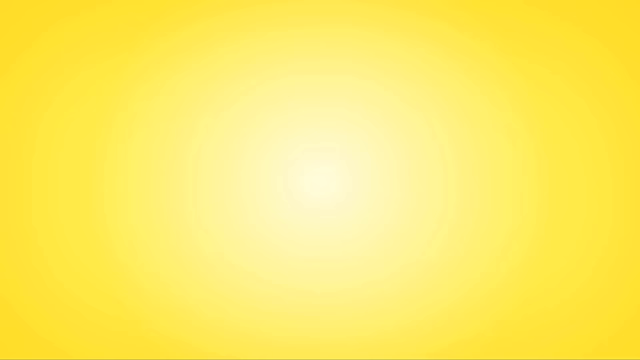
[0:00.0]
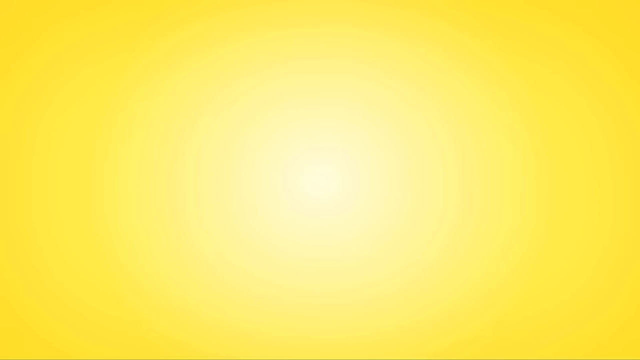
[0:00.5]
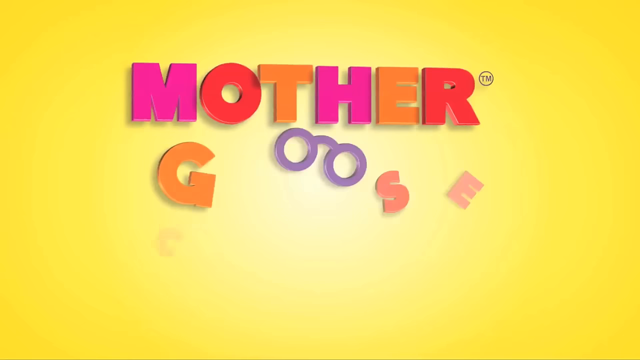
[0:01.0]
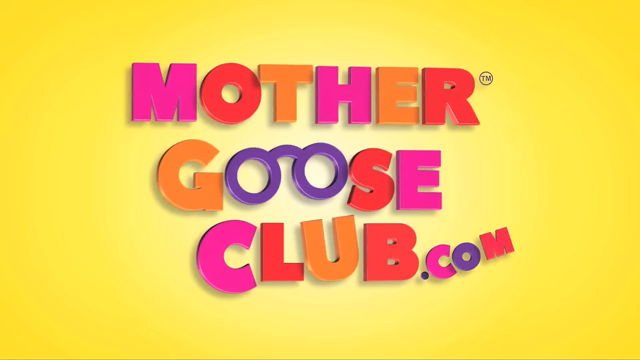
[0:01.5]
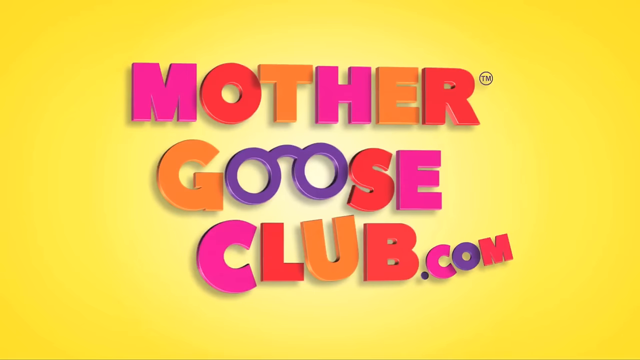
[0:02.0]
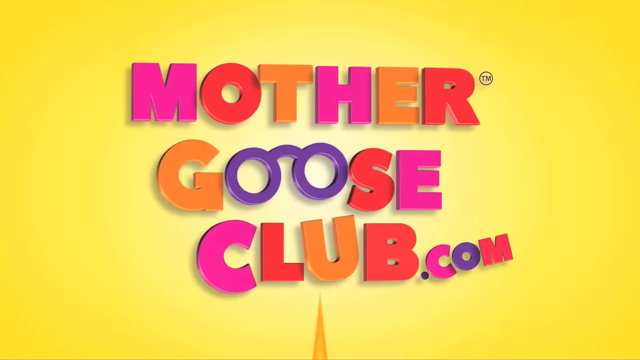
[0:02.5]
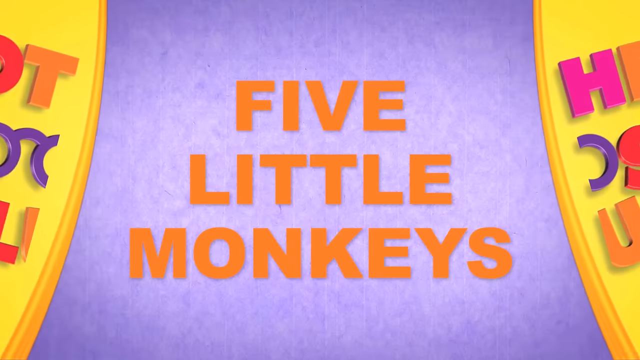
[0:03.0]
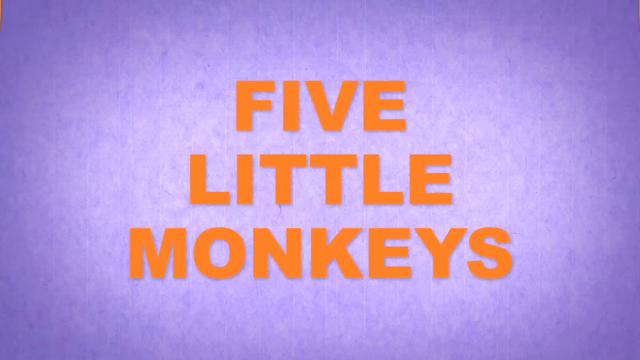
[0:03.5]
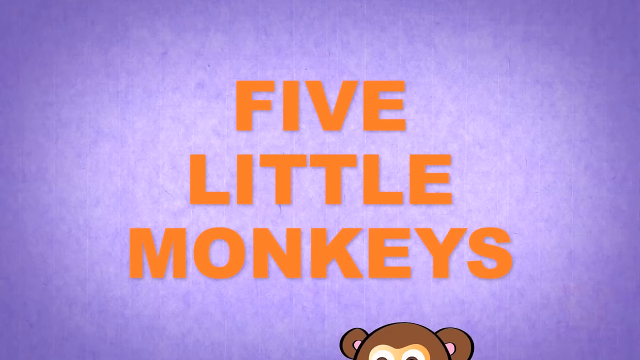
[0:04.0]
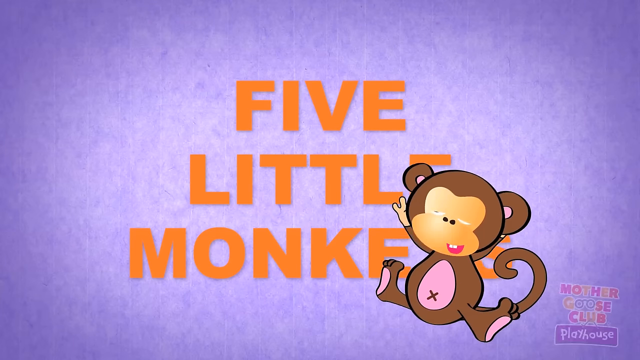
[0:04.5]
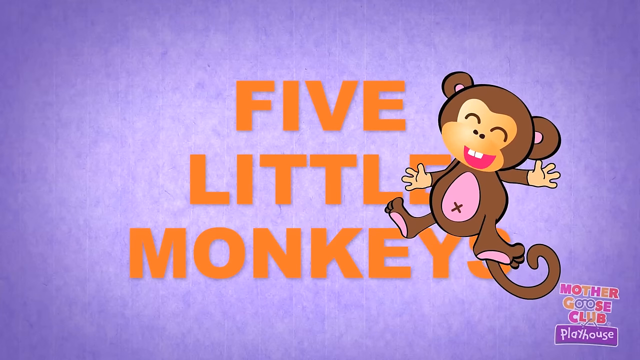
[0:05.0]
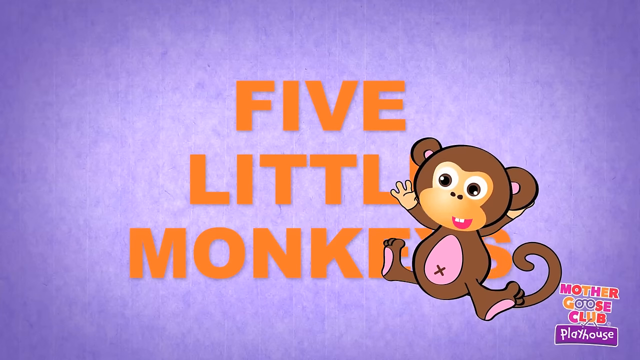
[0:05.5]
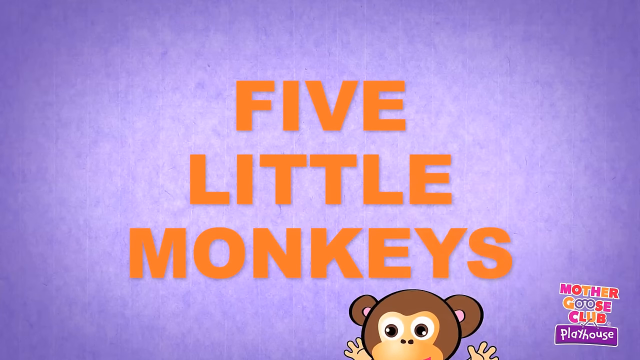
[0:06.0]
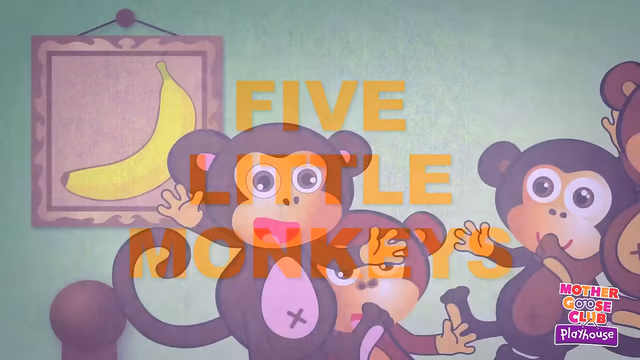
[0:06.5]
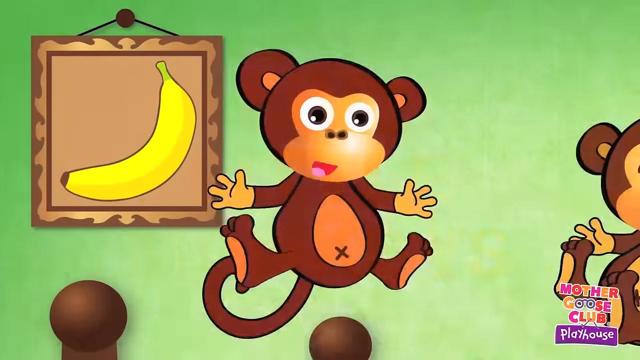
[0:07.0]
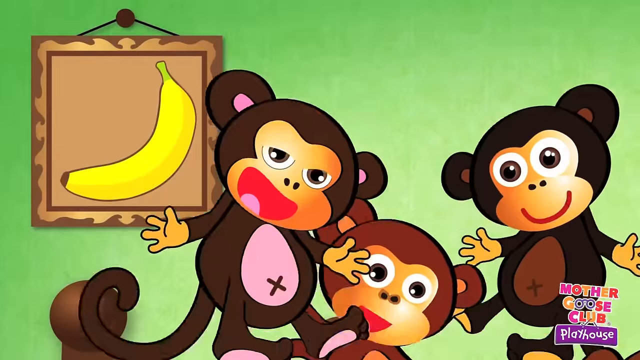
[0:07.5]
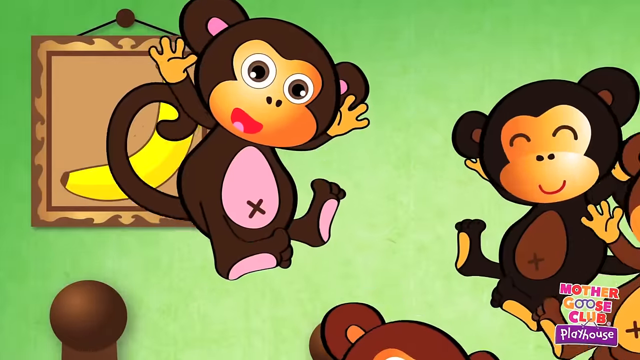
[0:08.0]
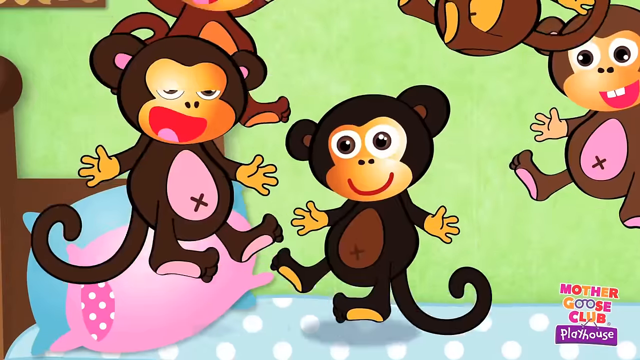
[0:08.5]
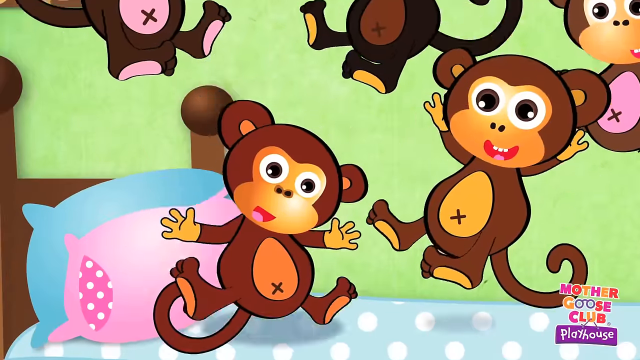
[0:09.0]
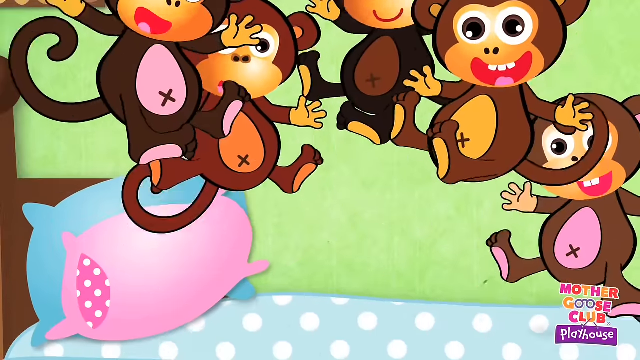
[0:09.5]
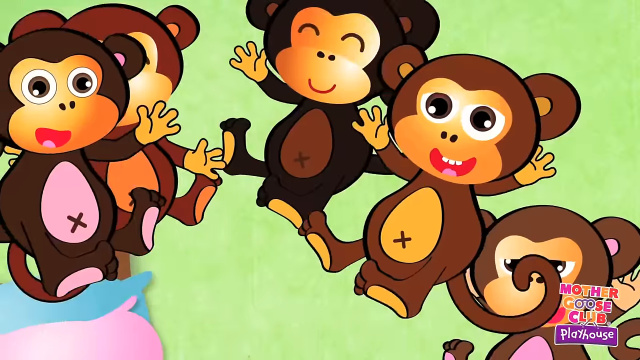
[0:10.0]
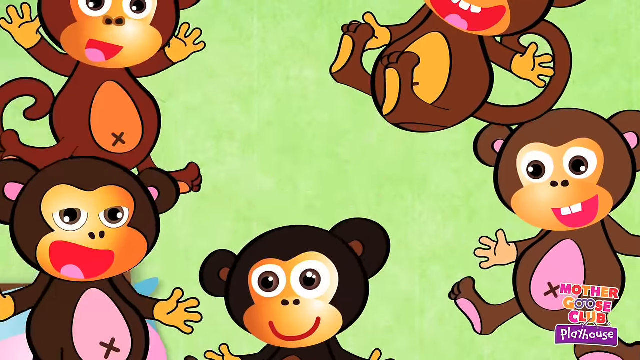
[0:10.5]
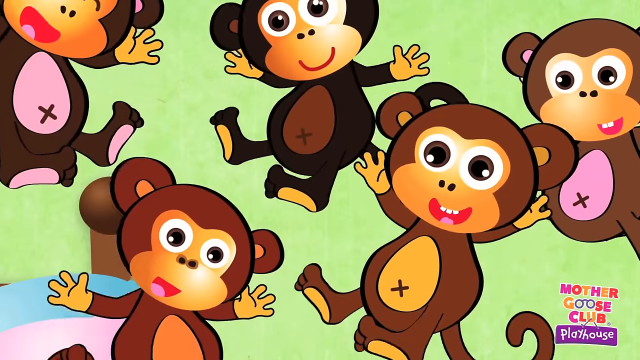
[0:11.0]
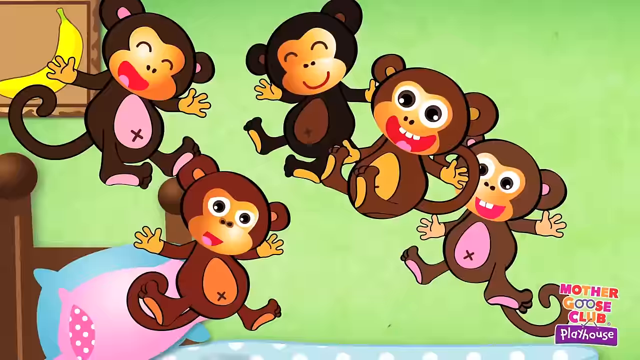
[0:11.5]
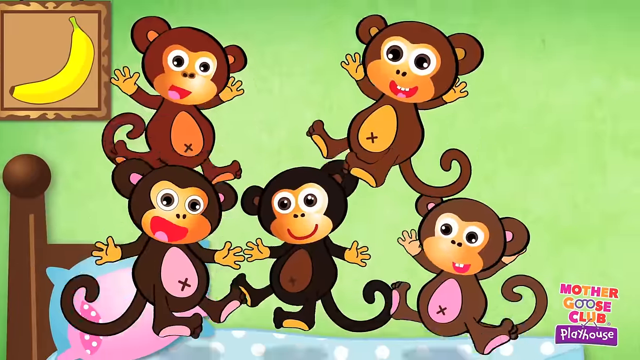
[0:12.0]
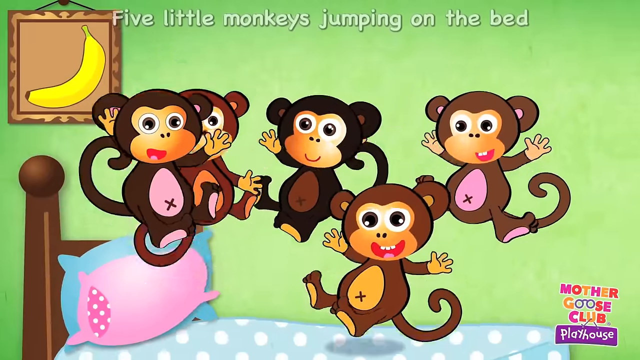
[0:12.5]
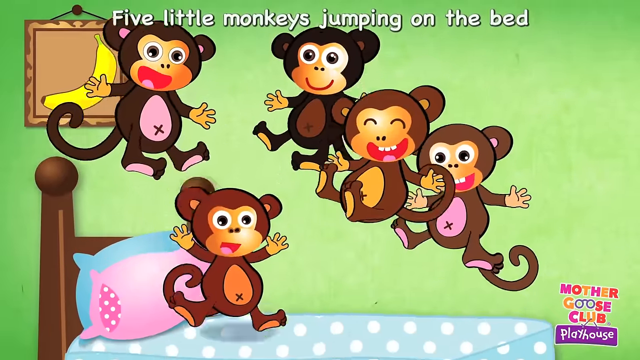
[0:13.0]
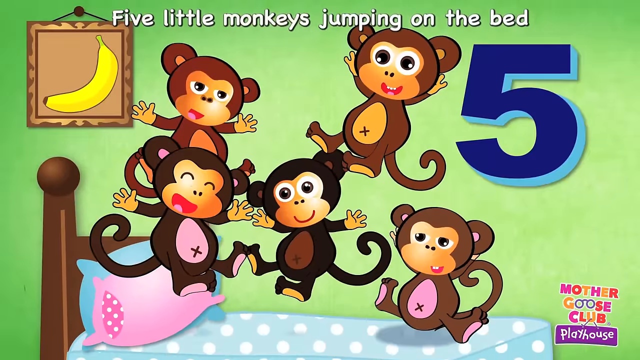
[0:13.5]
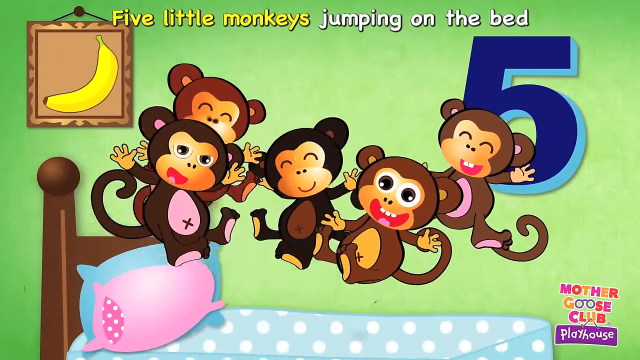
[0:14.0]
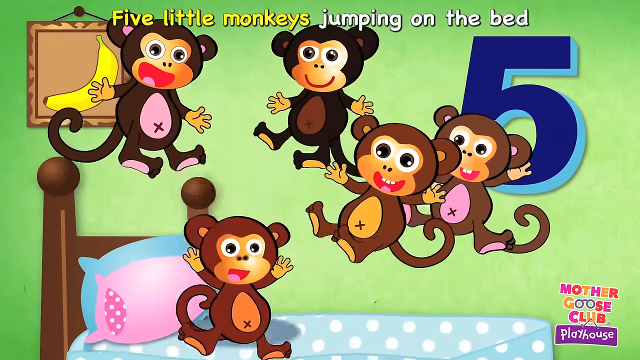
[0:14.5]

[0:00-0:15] Five little monkeys jump on a bed, apparently in an old Mother Goose rhyme story that is part of the Mother Goose Club. Three of the monkeys are brown and two are black, and there are always five of them, all jumping on the bed. Their mouths are open in a kind of smile shape, as if they are saying wow; as they jump, a couple of them show teeth and a couple do not. A banana is up in the upper left corner. Their bellies differ: two are pink, two are kind of yellow-orange-ish, and one is a solid, kind of brown color. On their ears, two have brown on the inside and two have a kind of pink color. A little pink pillow and a blue pillow in pillowcases are on the bed, and part of the pink pillow shows a little pink polka dot pattern.